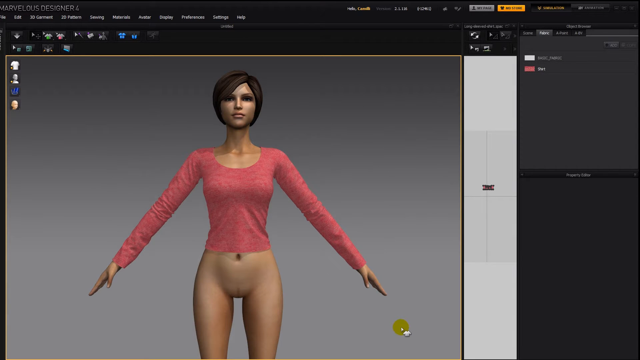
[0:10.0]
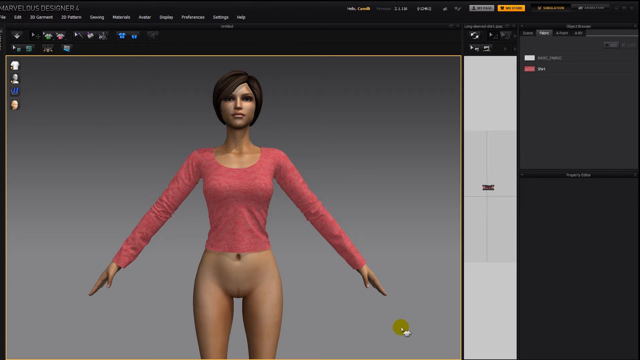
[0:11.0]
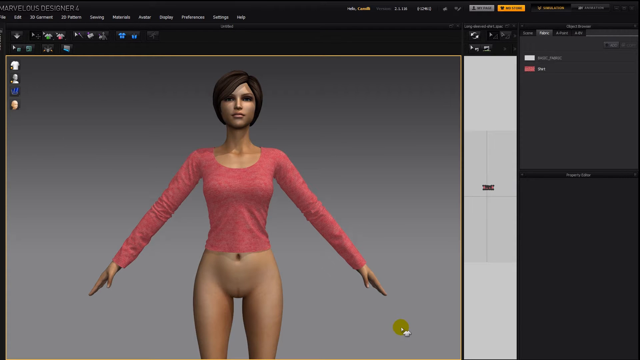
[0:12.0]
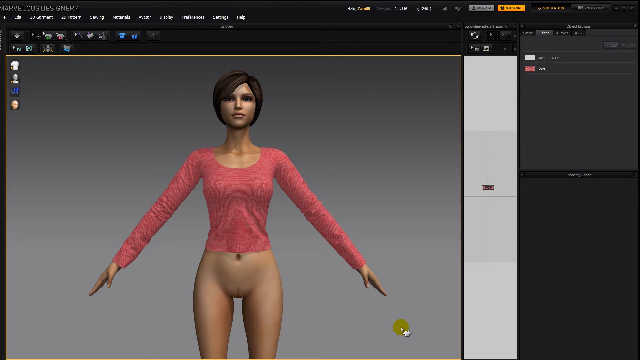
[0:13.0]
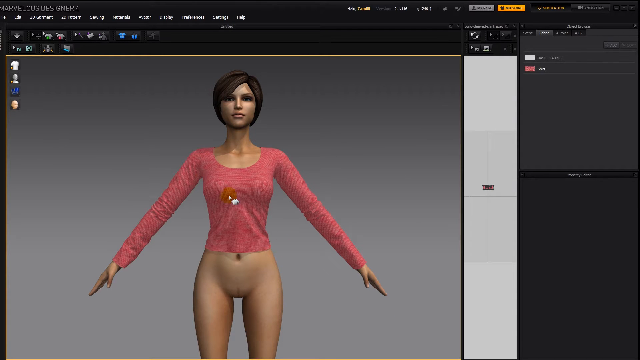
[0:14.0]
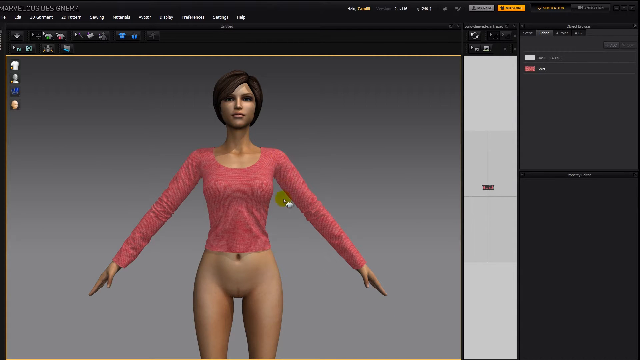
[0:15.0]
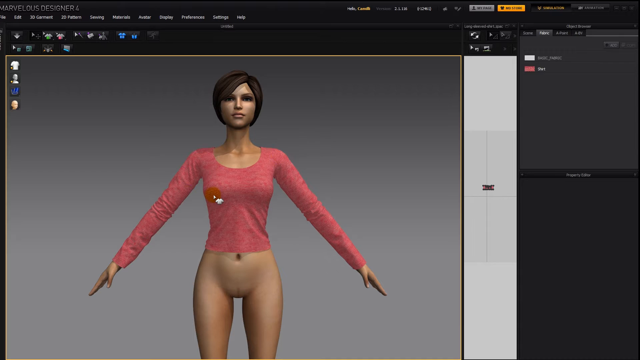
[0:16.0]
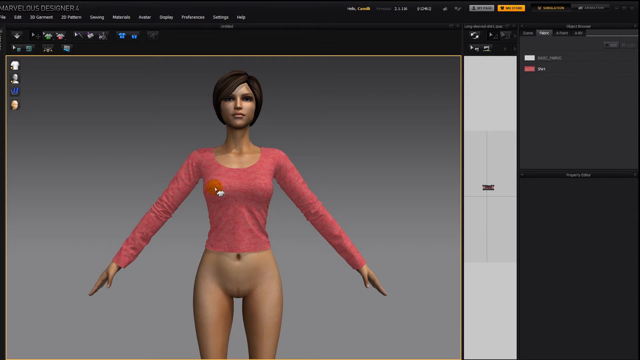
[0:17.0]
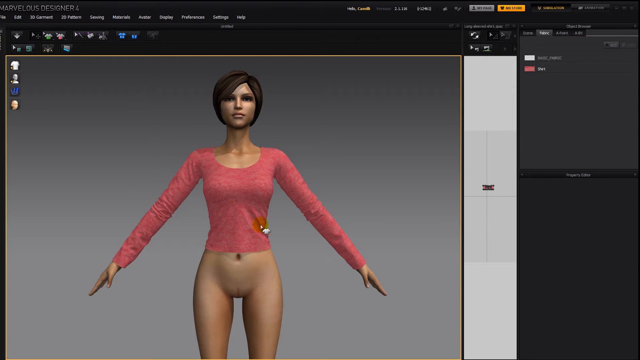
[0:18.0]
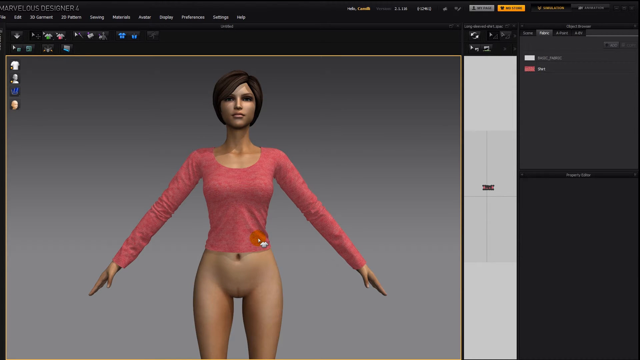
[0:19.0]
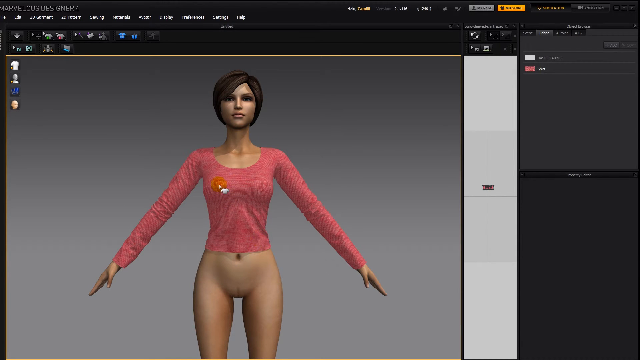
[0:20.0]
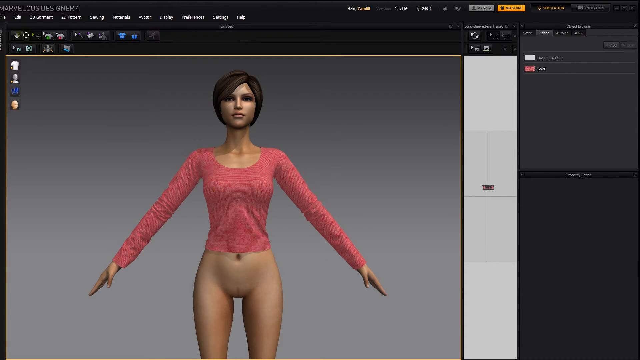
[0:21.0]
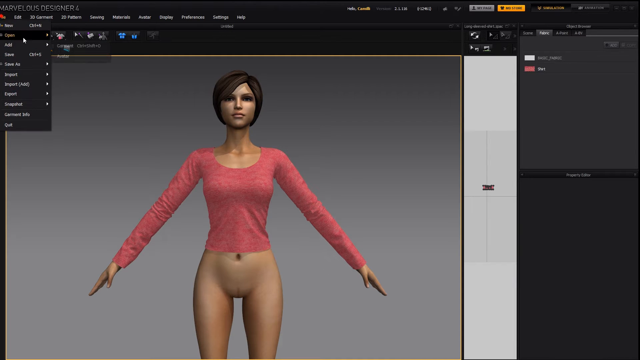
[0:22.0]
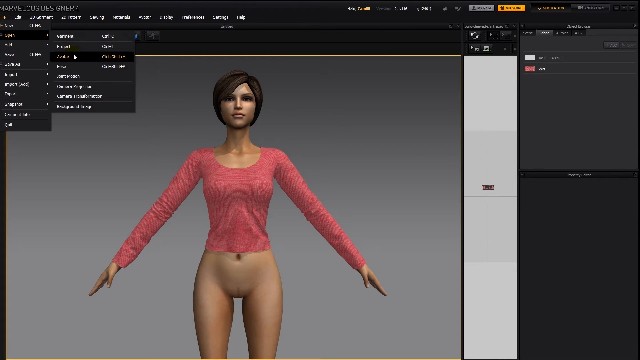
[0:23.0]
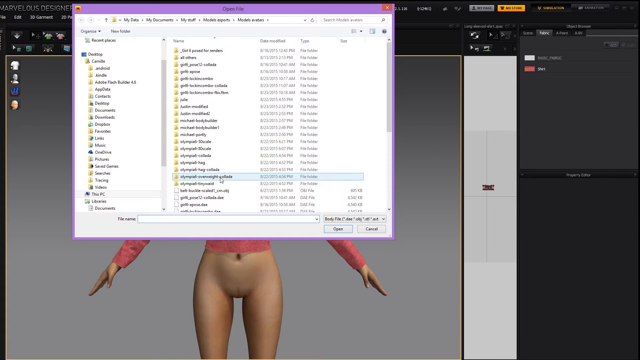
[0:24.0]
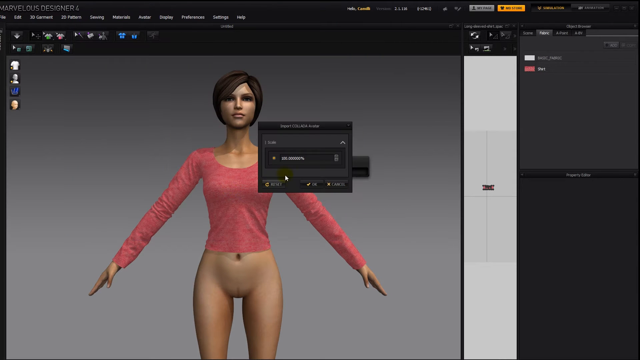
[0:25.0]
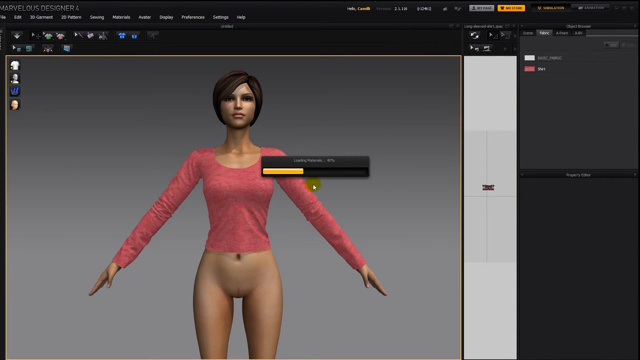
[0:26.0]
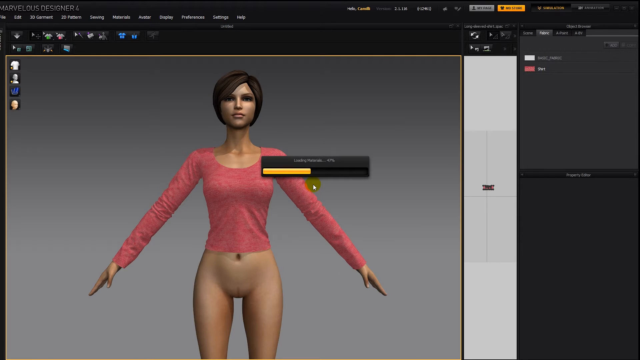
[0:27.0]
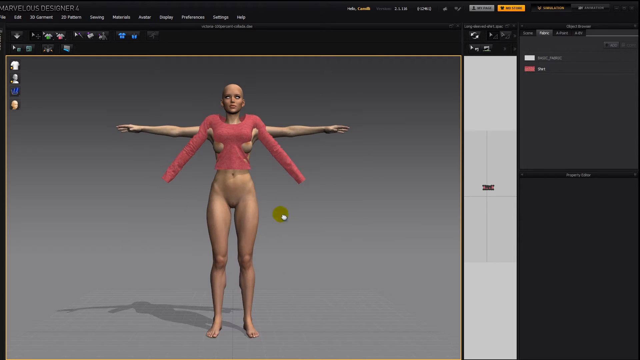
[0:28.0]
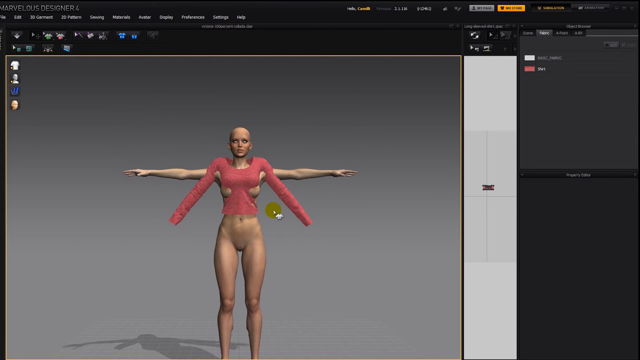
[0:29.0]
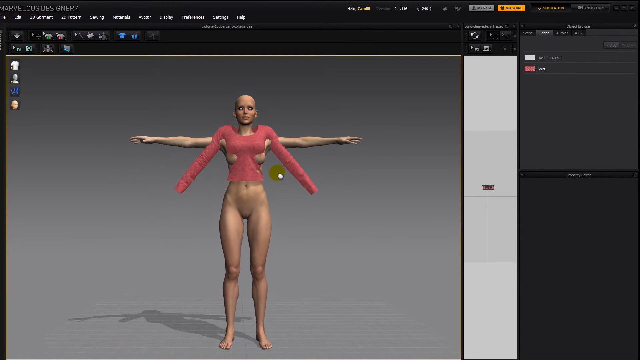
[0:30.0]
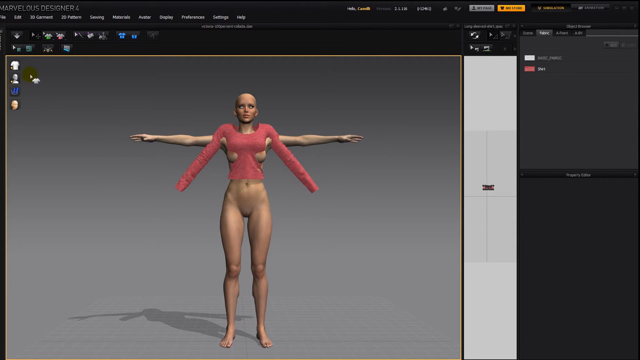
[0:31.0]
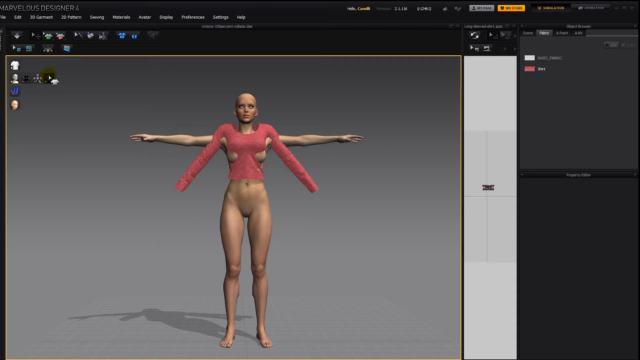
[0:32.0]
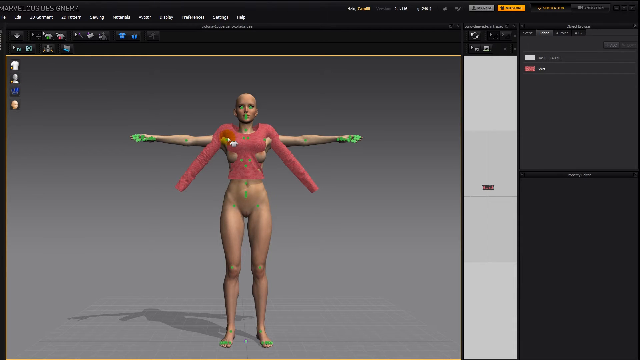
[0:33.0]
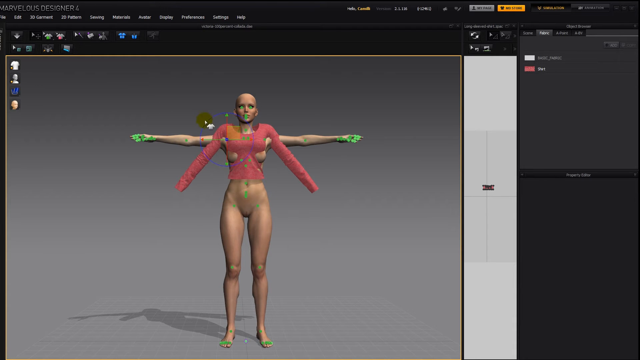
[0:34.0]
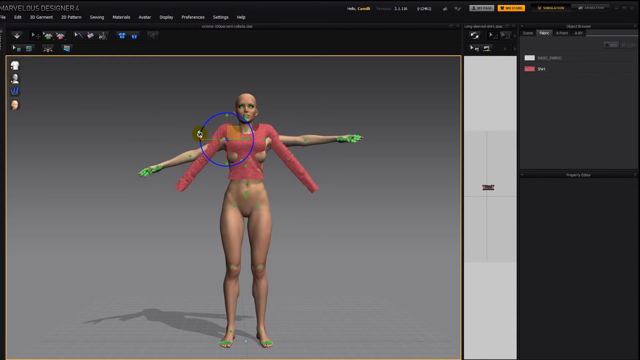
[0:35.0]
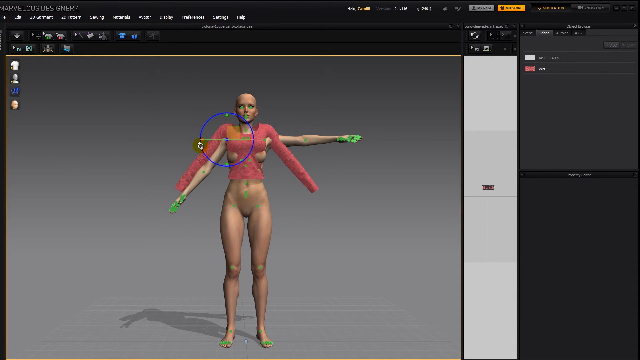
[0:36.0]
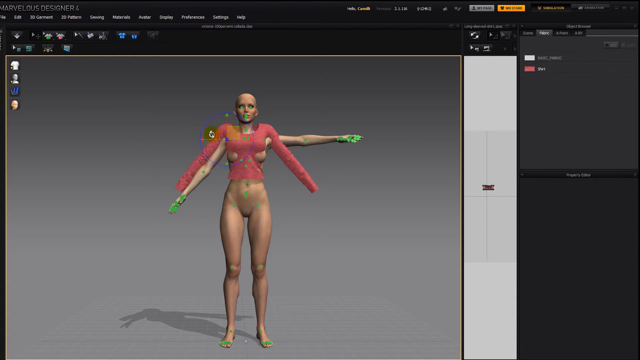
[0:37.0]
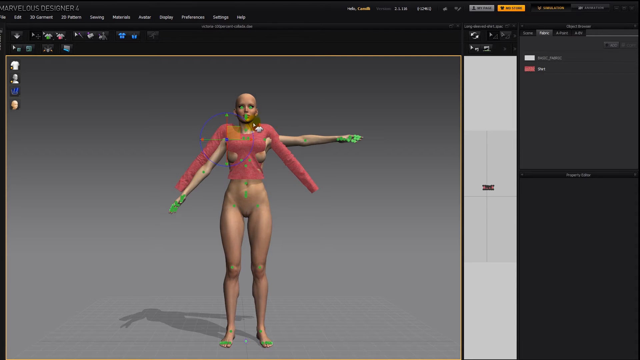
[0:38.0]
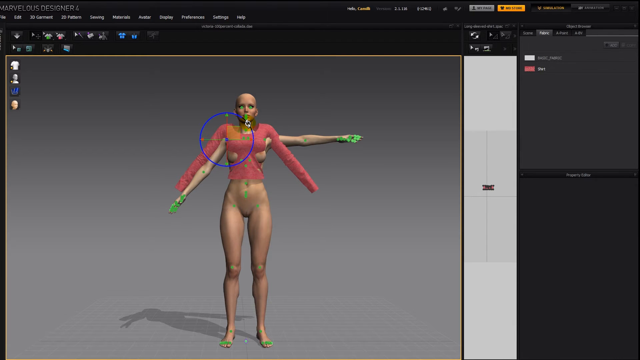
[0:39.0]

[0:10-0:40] The animated woman is still shown, and a cursor indicates what is going to be done with her arms. Settings are opened, a list is scrolled down a couple of times, one item is clicked, and something loads. Suddenly the woman appears almost as if her shirt is hanging off of her; the shirt is still intact as before, but her arms now extend completely outward from side to side. Apparently the demonstration is about adjusting her arms to where the shirt is. The cursor clicks on her and a circle appears; clicking on it allows the arms to be adjusted to exactly where the shirt is. Clicking right around where her arms are makes her arms move downwards.